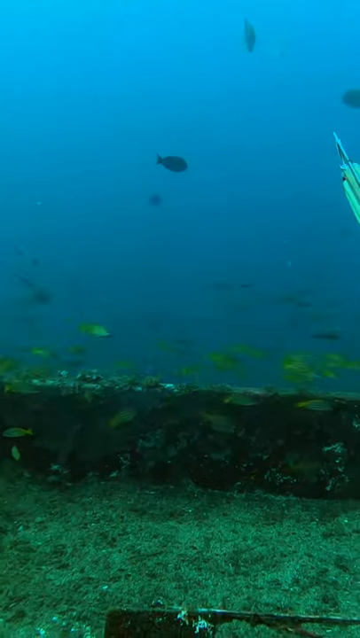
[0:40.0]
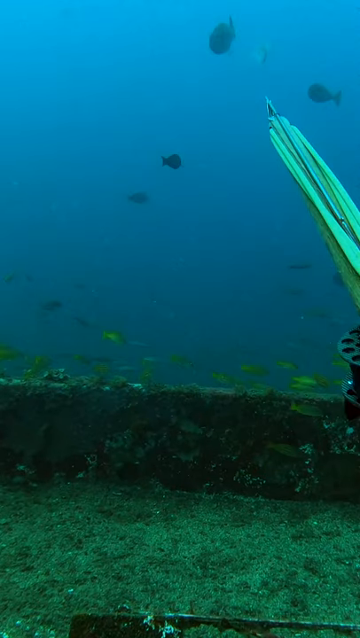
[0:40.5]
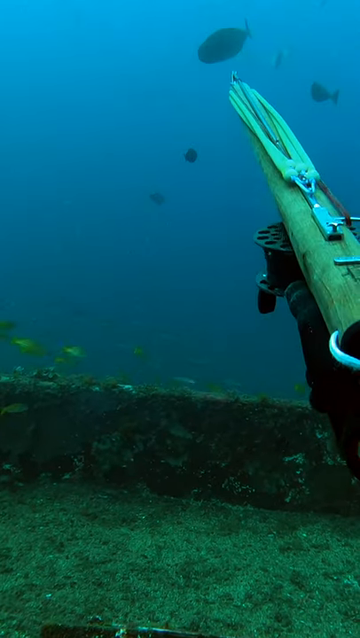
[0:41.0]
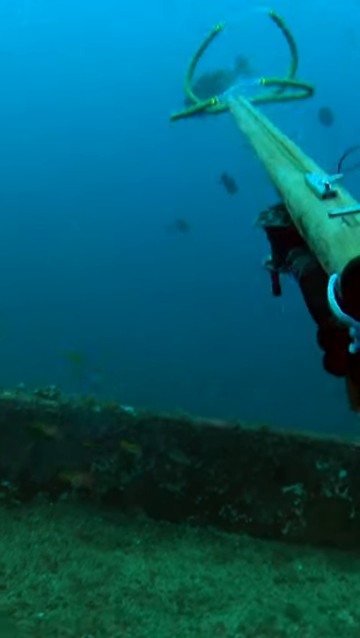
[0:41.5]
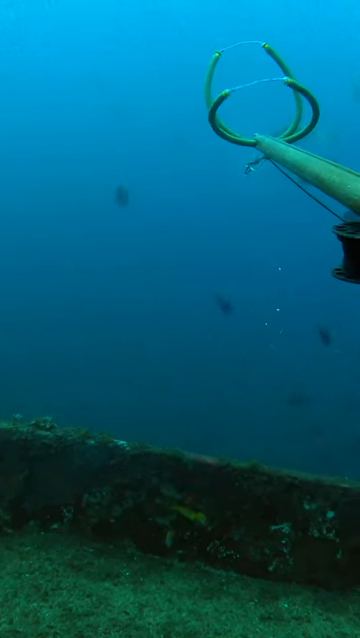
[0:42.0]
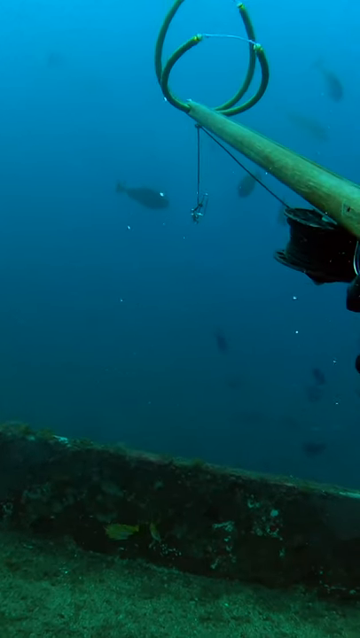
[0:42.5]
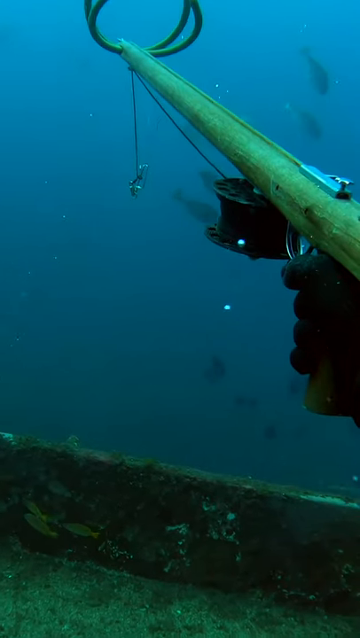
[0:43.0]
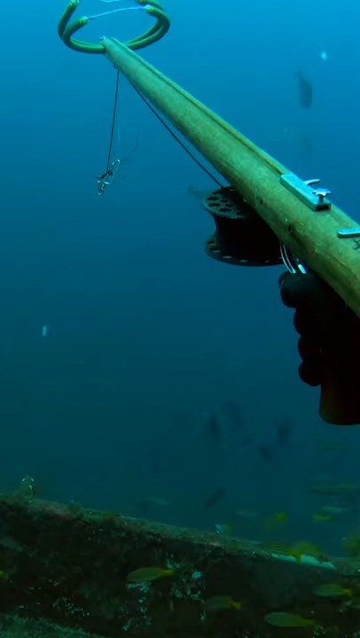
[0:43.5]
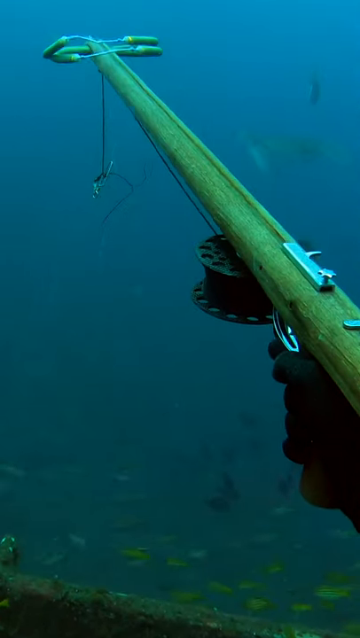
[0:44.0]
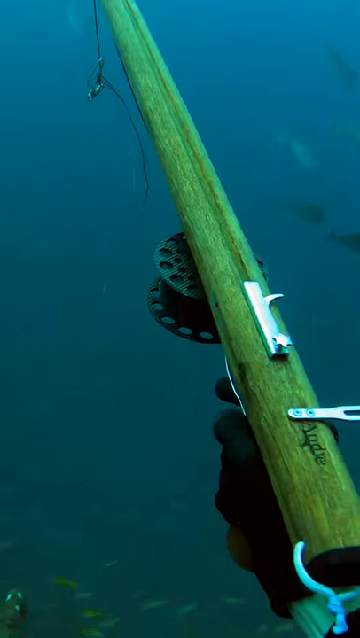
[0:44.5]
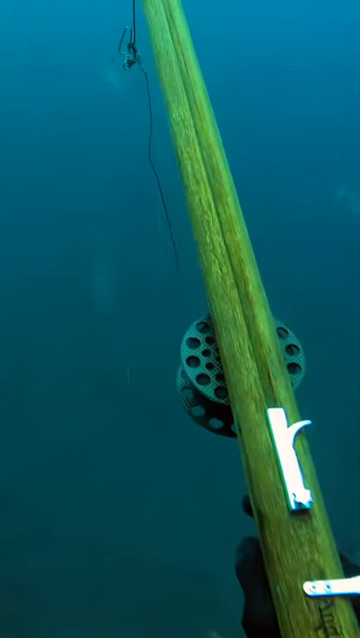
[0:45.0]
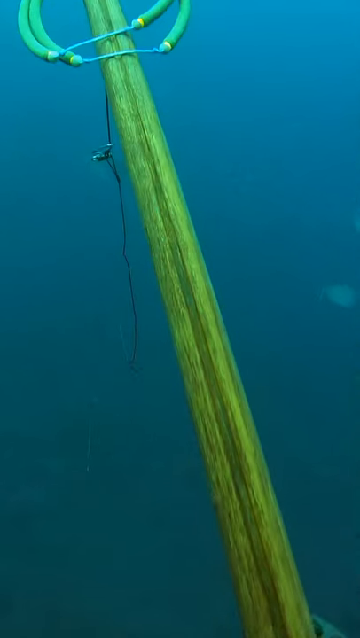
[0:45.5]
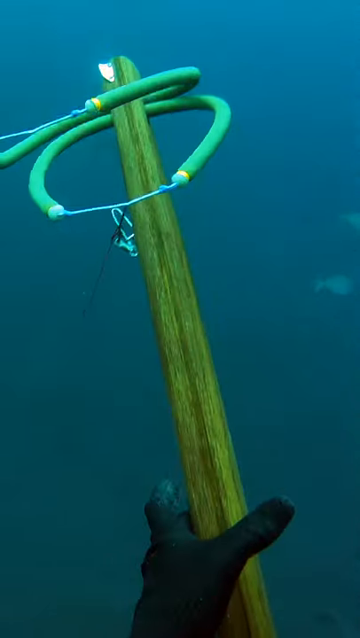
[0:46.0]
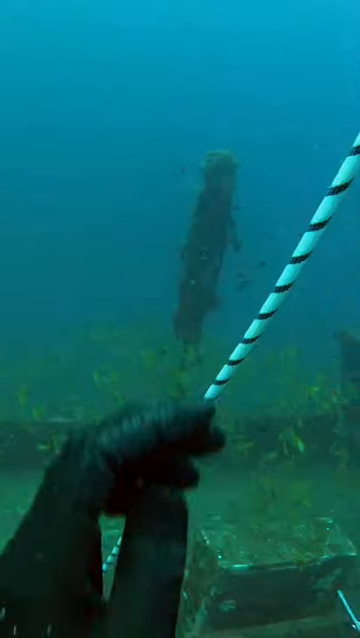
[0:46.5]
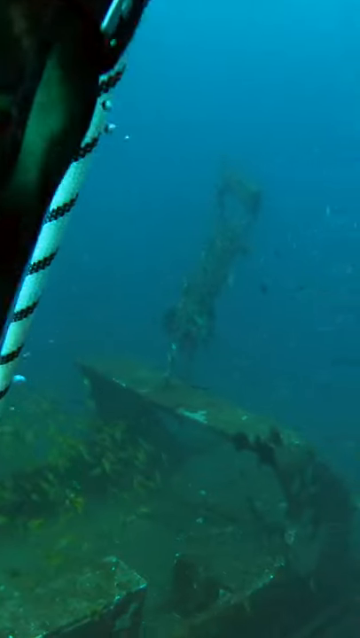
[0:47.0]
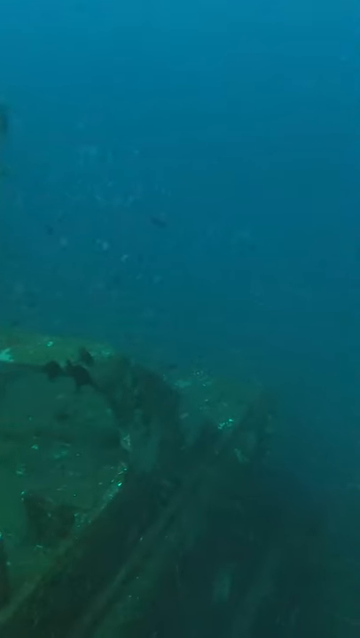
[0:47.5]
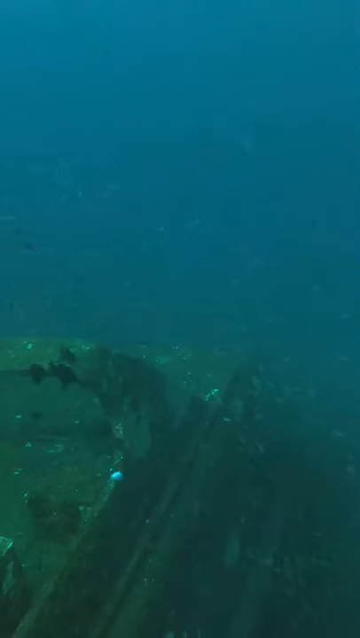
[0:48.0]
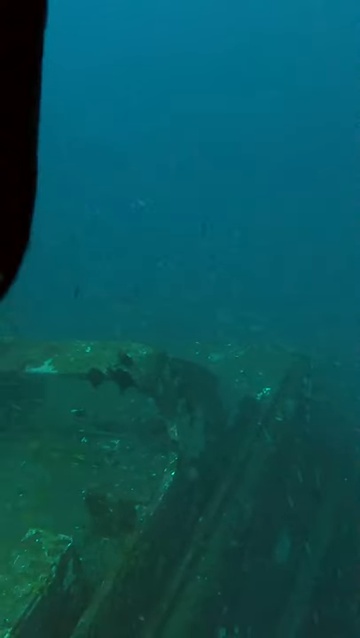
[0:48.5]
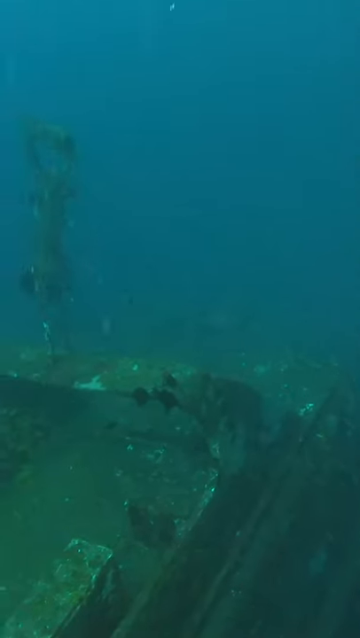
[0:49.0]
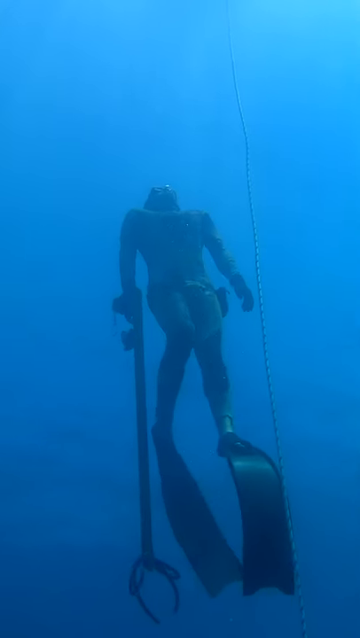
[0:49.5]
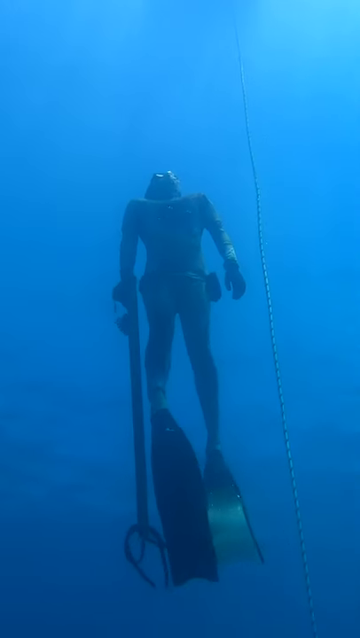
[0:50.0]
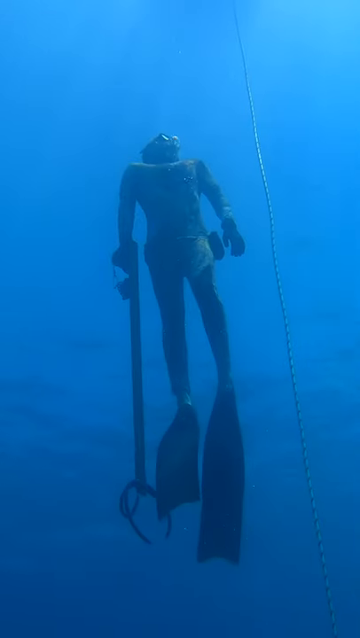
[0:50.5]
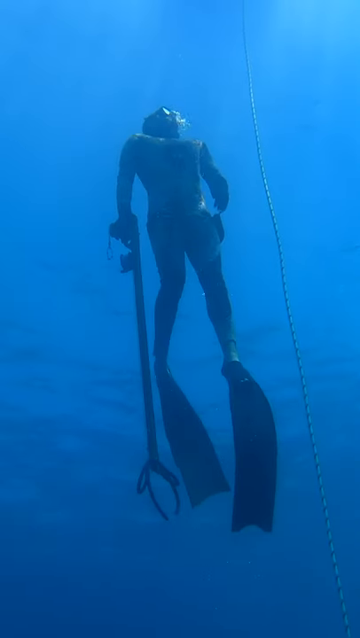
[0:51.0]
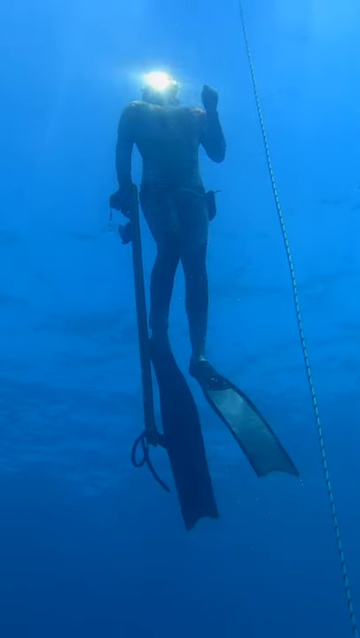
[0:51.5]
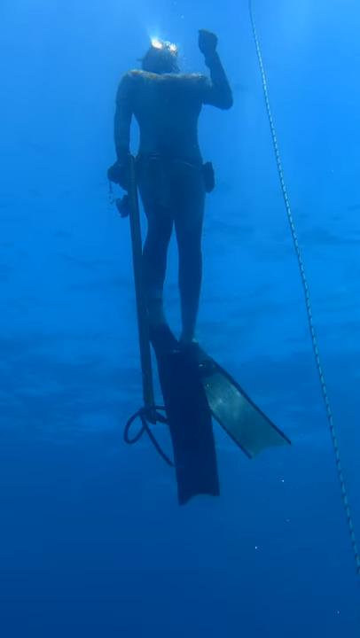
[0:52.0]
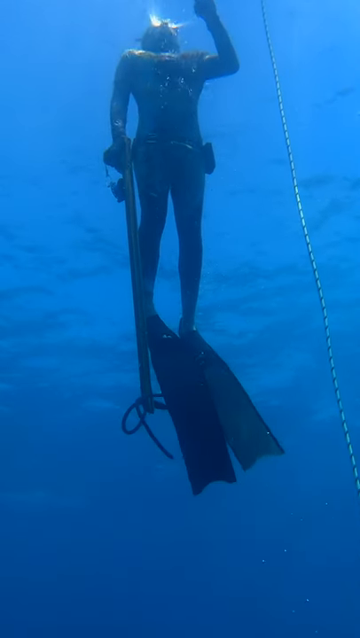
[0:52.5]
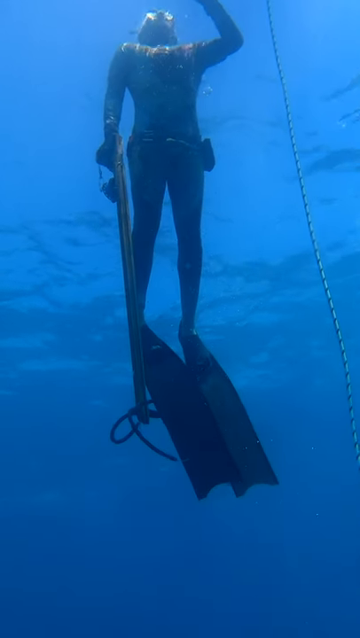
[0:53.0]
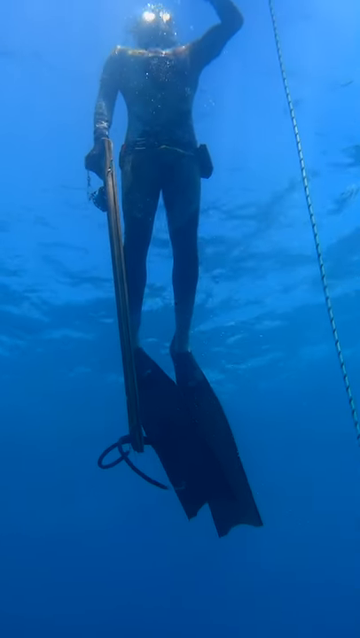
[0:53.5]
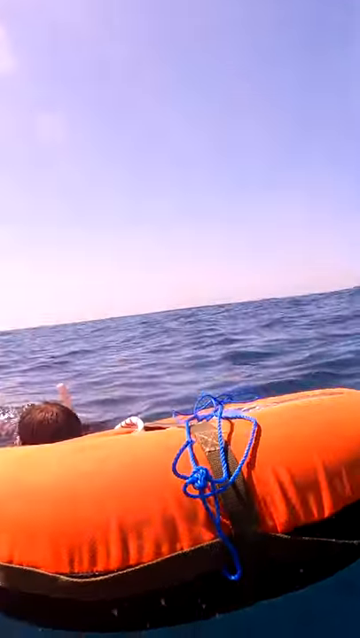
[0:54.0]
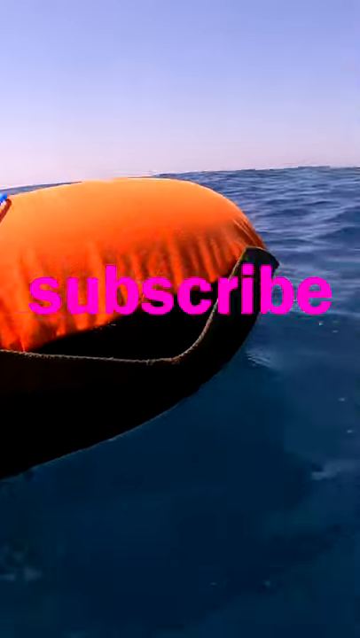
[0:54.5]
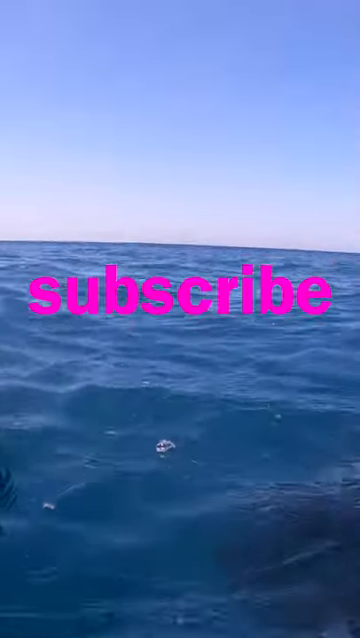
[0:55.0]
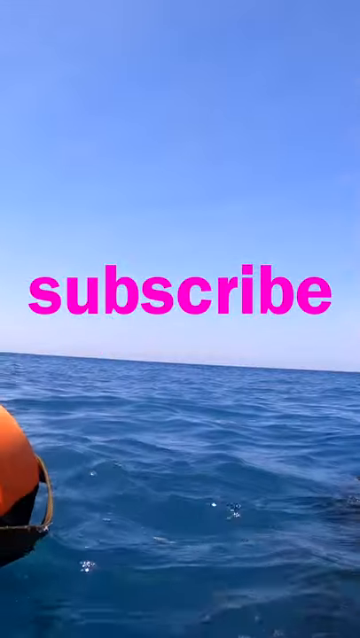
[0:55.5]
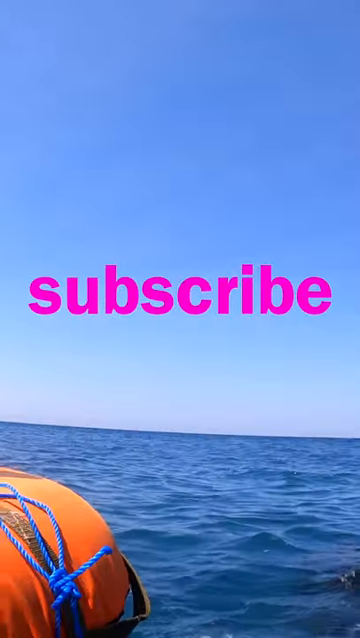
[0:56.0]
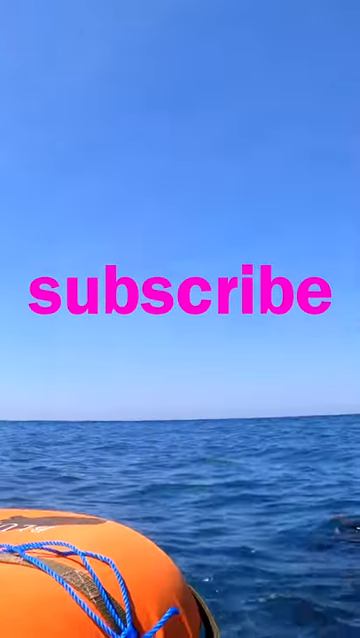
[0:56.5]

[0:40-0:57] The diver continues spearfishing near the bottom of the ocean near the medium-sized sunken boat. The footage starts from his perspective, as if he is holding the camera: he holds up his spear gun, a fish is visible in the background, and he shoots the spear gun and hits the fish. The scene then cuts to a far shot of him swimming back to the surface with his catch. As he rises with his fish, the same illustration appears in a white circle, almost like a frog human wearing scuba gear, with fins and goggles.